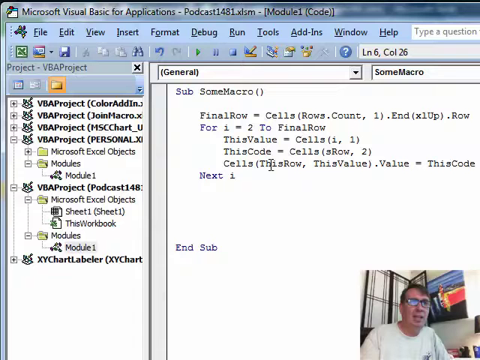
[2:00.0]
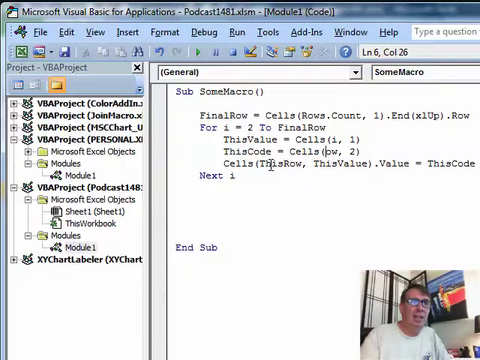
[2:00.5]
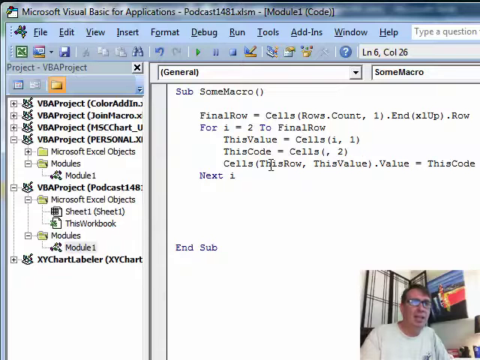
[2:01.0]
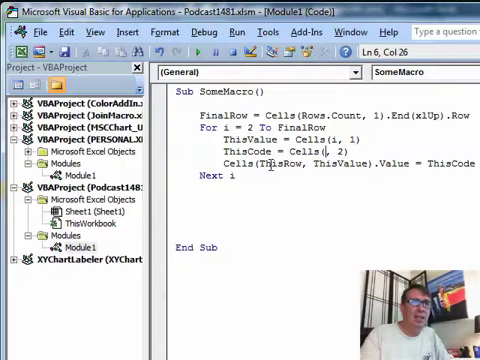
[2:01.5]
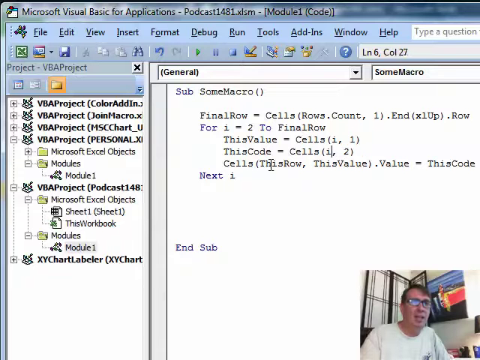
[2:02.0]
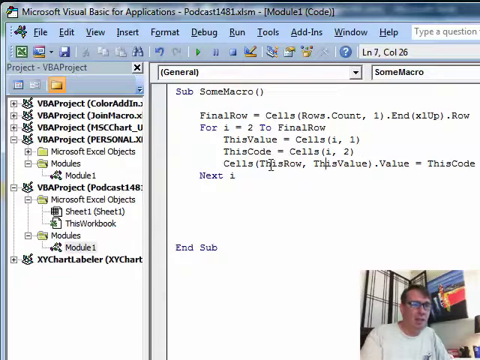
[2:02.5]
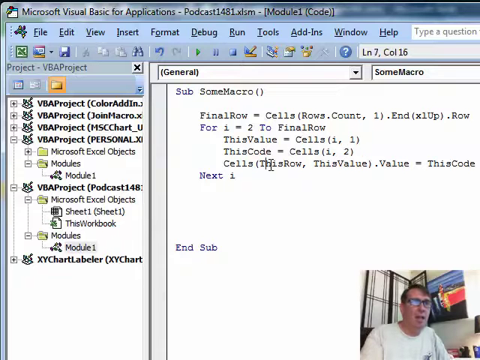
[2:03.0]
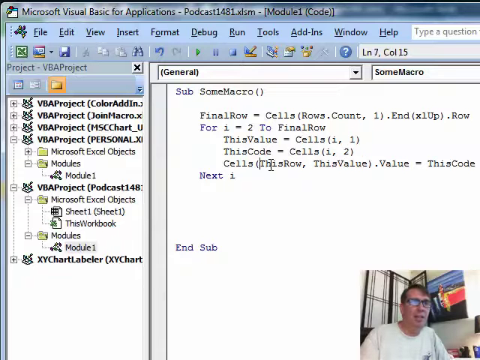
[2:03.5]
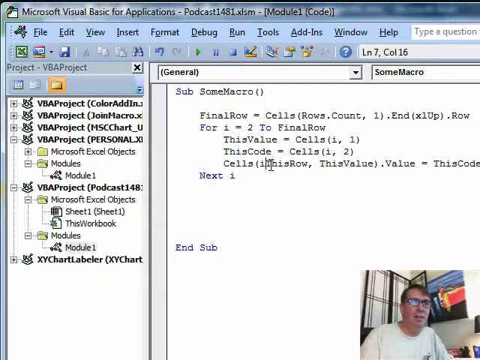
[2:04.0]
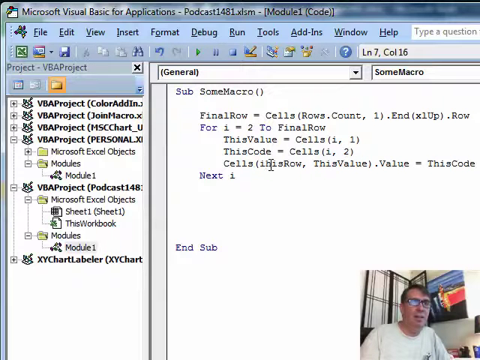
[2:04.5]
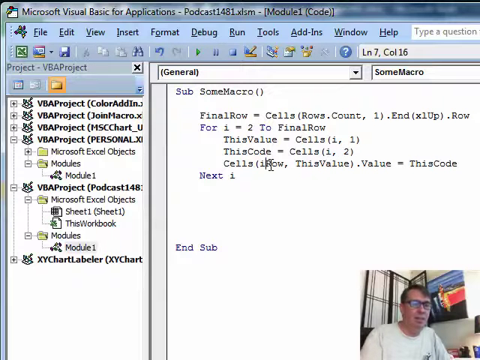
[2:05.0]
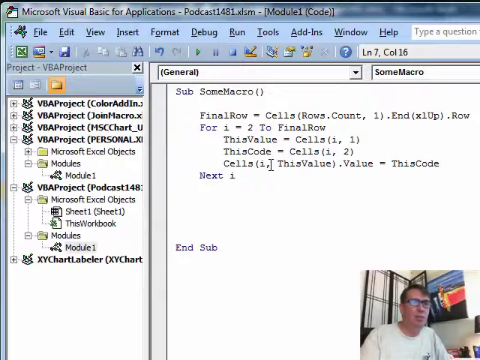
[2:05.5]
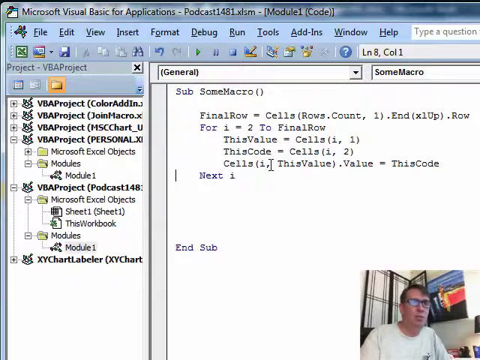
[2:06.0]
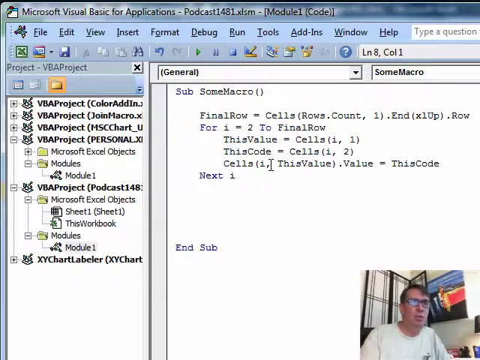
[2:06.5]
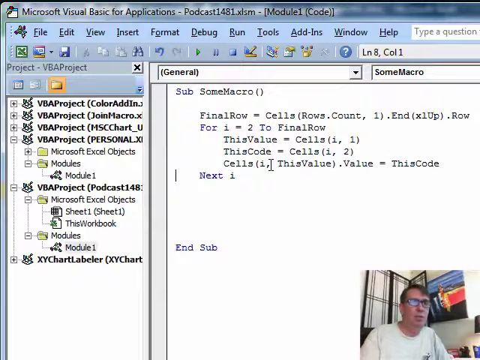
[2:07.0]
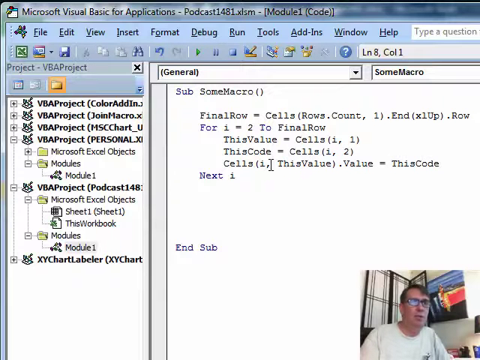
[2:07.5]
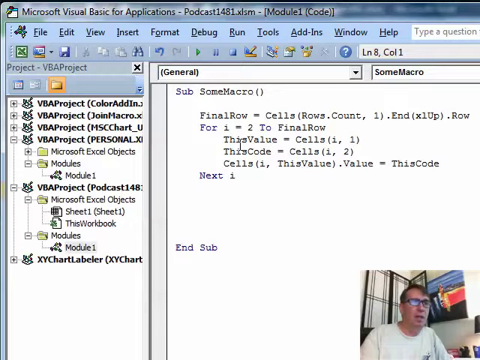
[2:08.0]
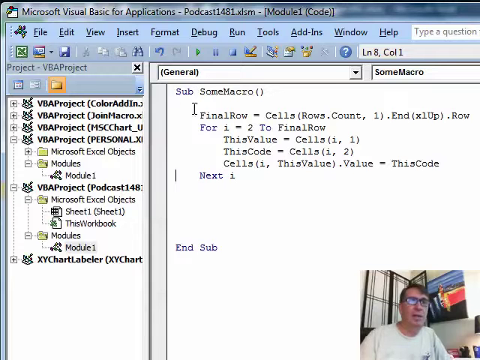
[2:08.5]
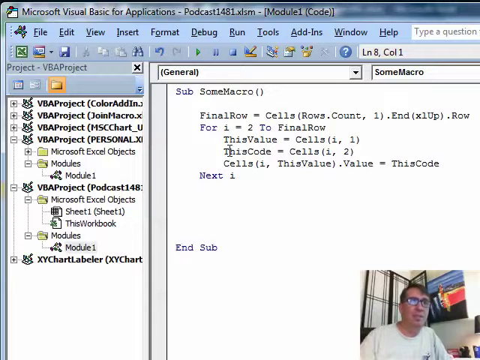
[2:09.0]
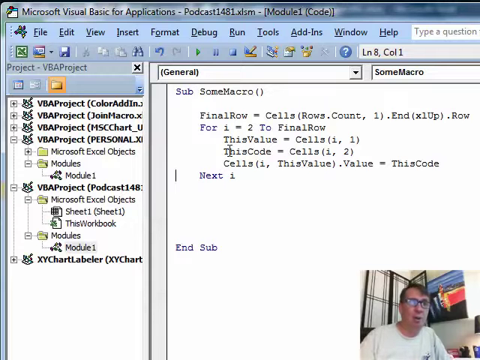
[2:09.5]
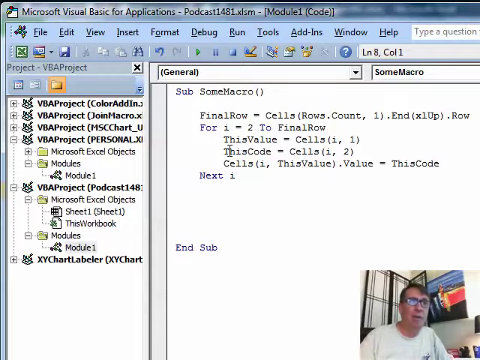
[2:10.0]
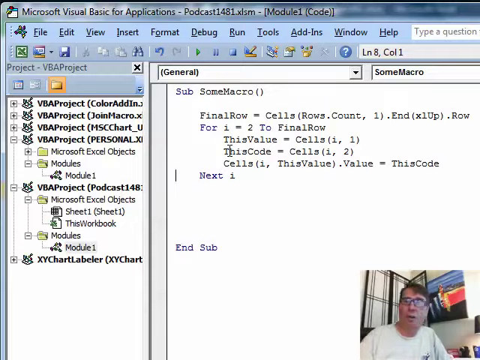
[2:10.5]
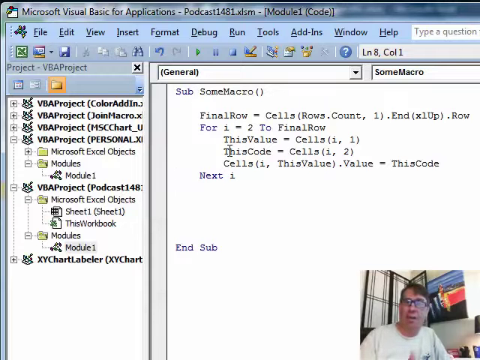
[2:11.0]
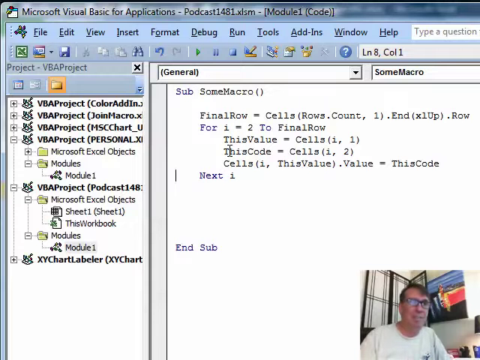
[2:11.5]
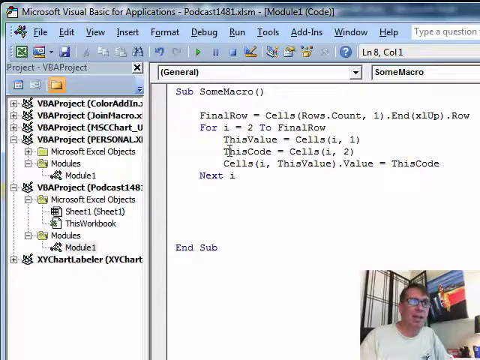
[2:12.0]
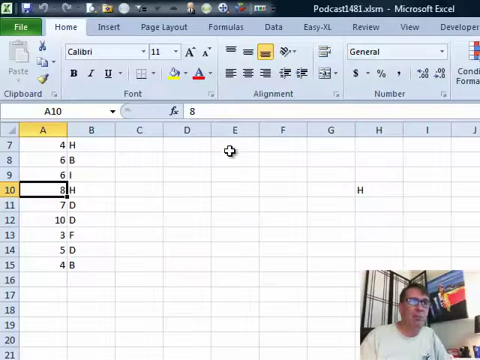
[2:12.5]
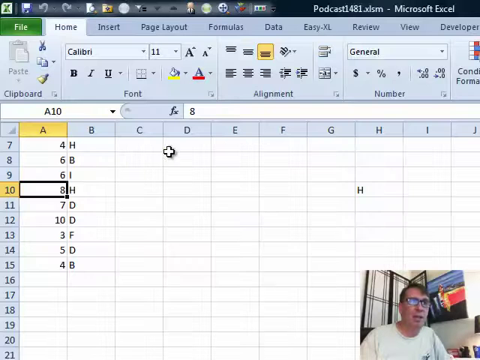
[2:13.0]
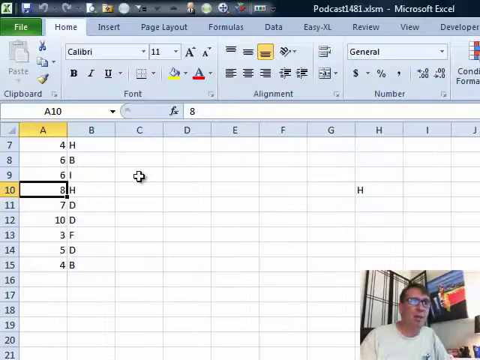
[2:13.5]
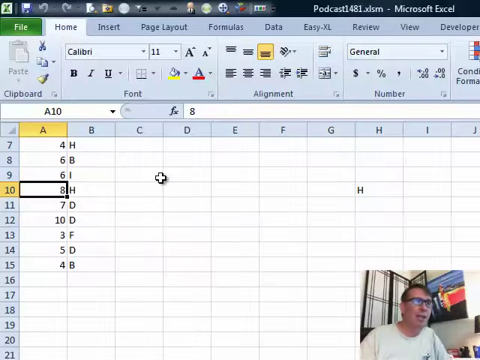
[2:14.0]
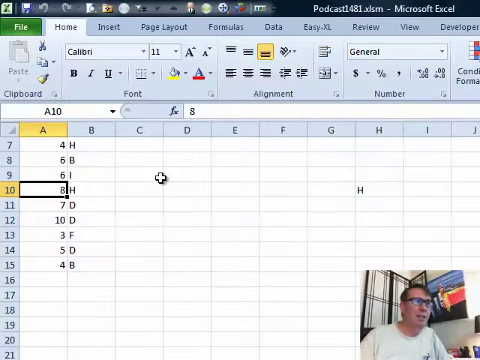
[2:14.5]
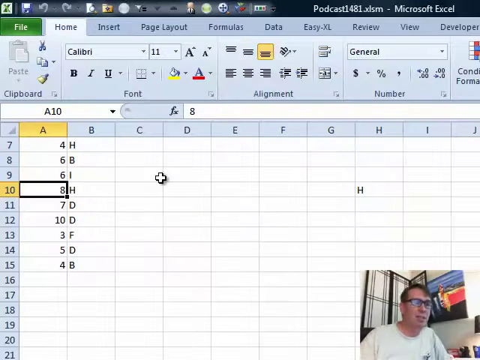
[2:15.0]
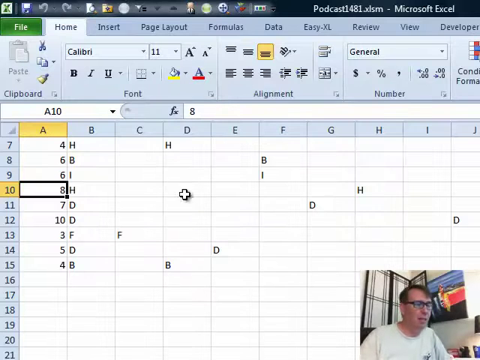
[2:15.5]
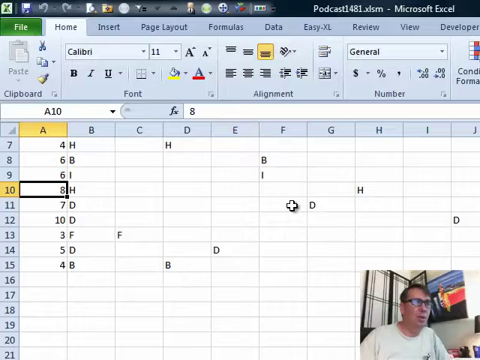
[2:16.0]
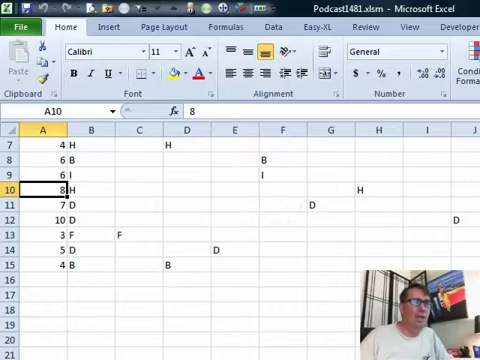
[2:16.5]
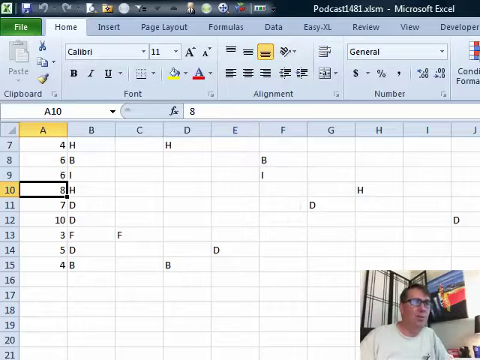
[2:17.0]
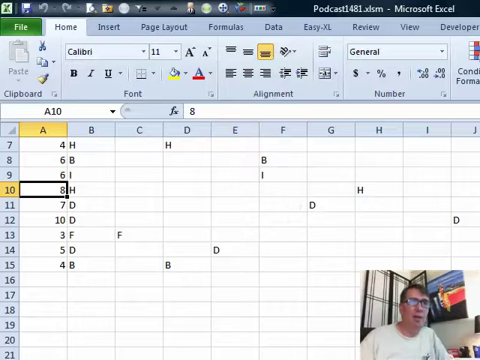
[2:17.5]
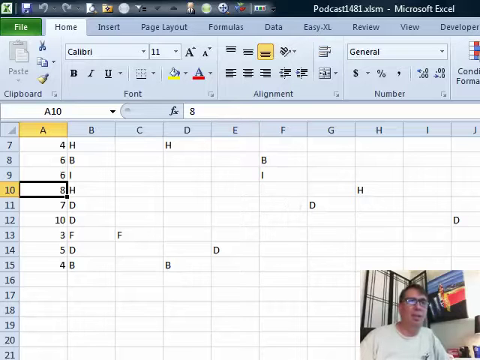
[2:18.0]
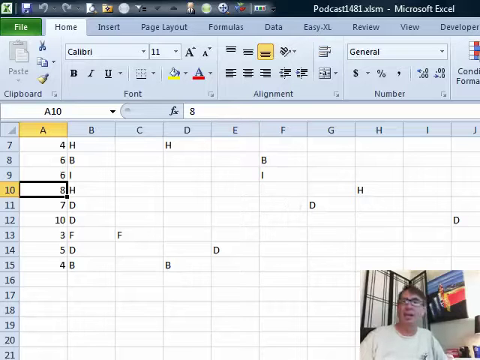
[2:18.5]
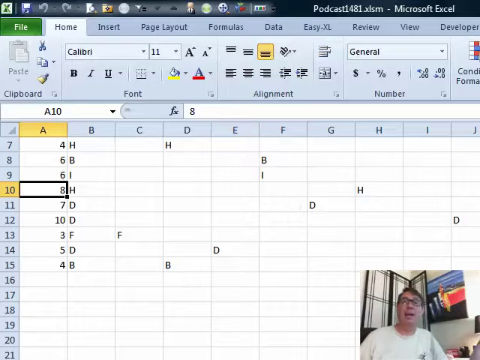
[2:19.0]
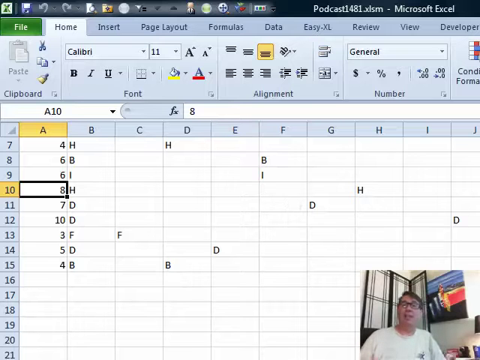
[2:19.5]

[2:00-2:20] The video starts on the VBA macro screen, then goes to the spreadsheet, which changes from whatever he is putting in. A man talks in a picture-in-picture at the bottom right; he is white, with dark hair, a white shirt and black glasses. Behind him is a white-and-black divider and a picture with blue, red and black on it. On the spreadsheet, column A has numbers and column B has letters, and he seems to be showing how to write macros that change the spreadsheet. Column A and row 10 are highlighted in yellow. Then letters appear spread out across different columns, and the view goes back to the VBA project screen.